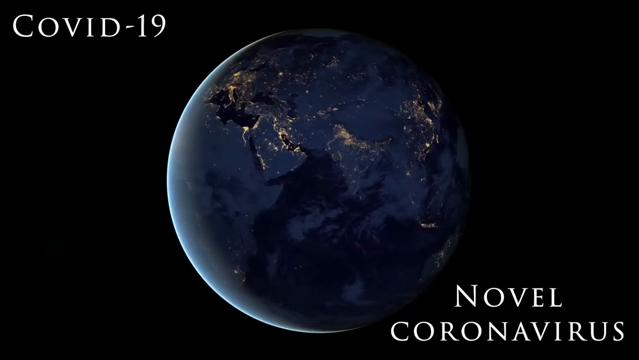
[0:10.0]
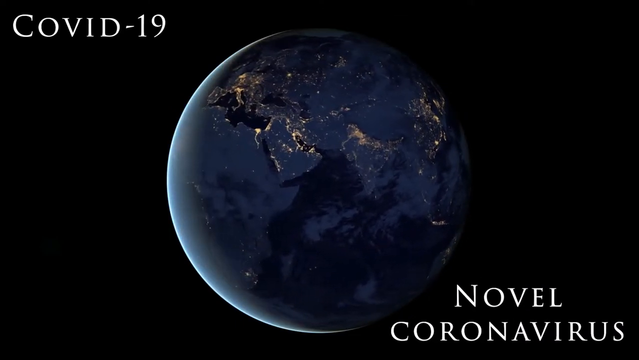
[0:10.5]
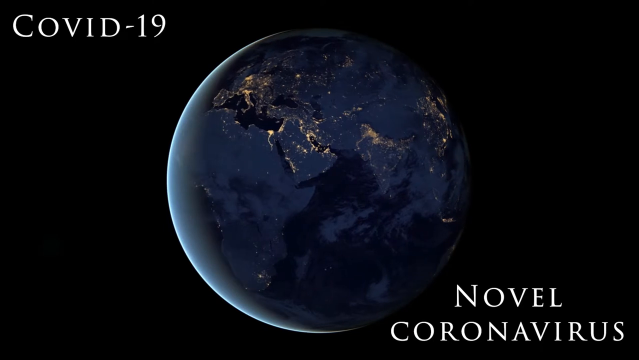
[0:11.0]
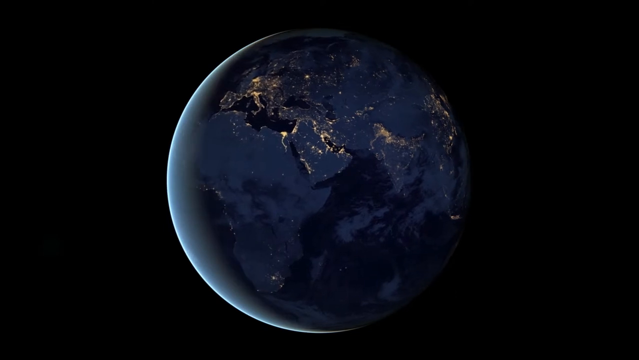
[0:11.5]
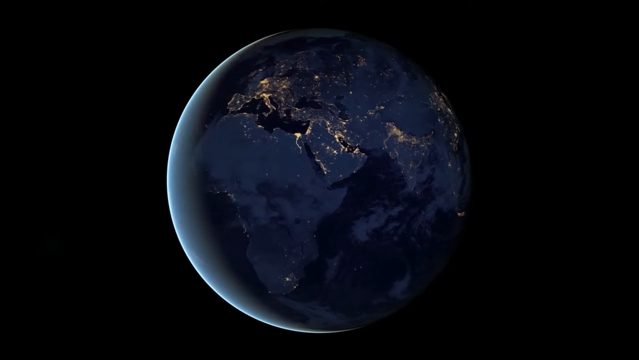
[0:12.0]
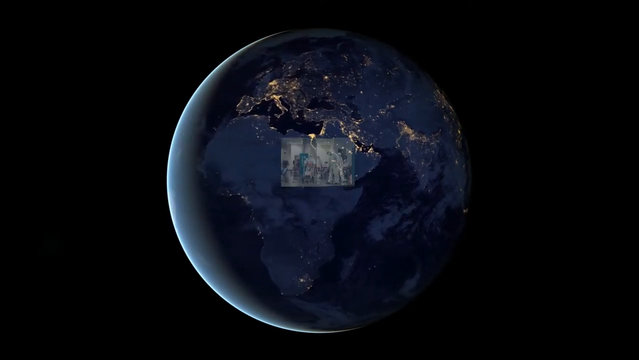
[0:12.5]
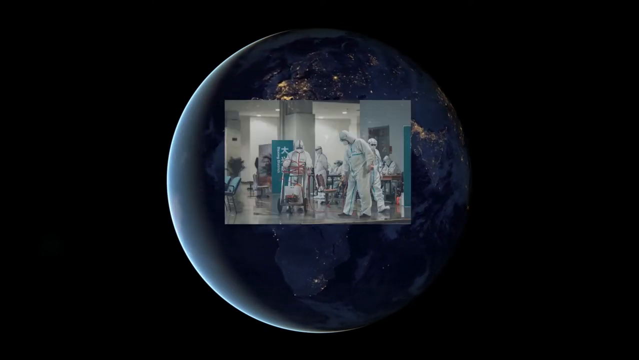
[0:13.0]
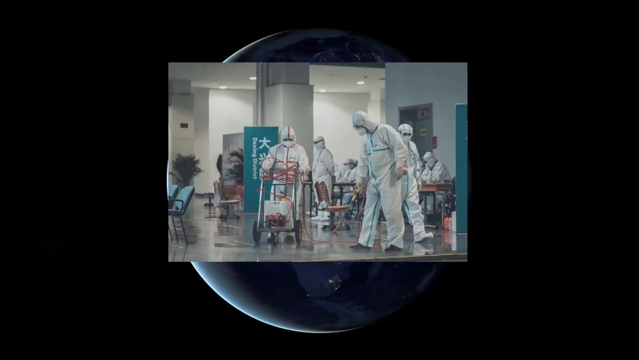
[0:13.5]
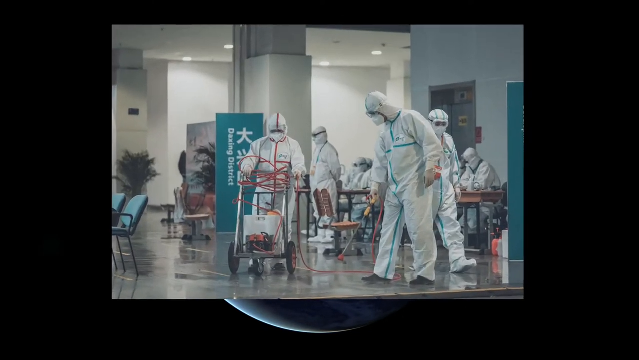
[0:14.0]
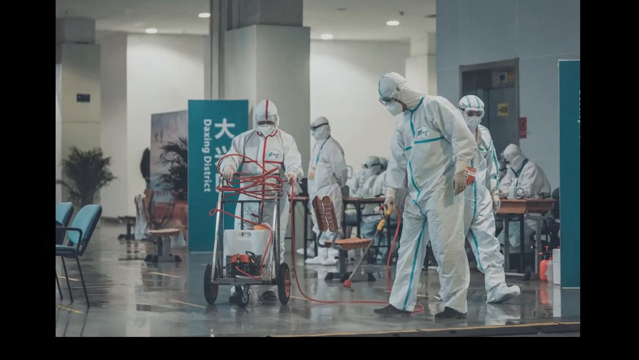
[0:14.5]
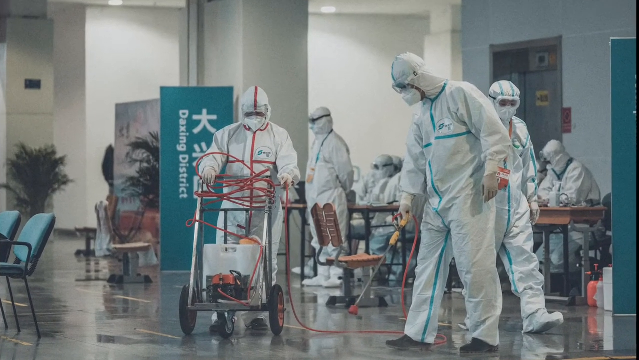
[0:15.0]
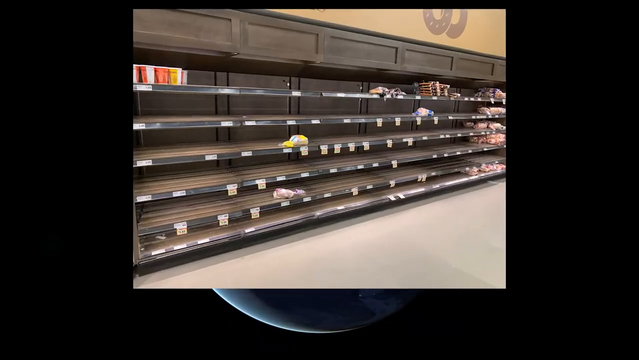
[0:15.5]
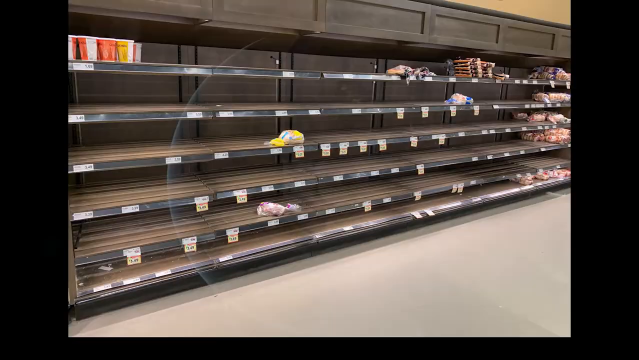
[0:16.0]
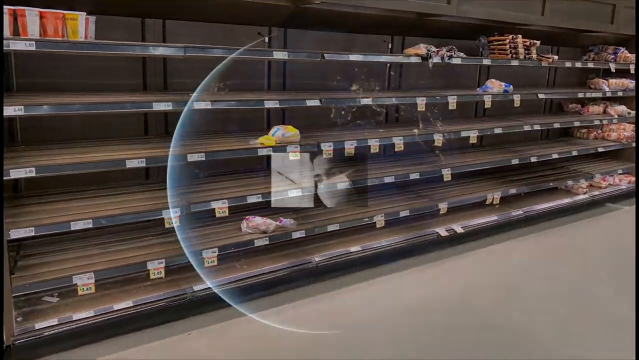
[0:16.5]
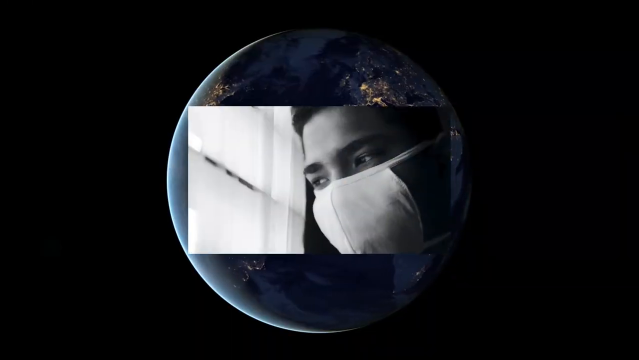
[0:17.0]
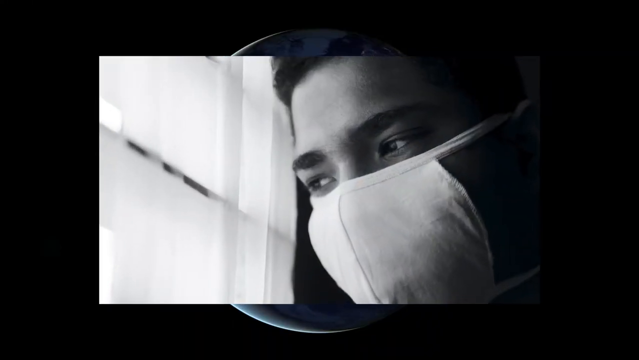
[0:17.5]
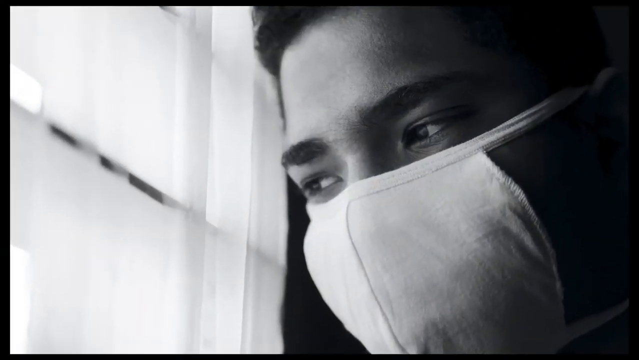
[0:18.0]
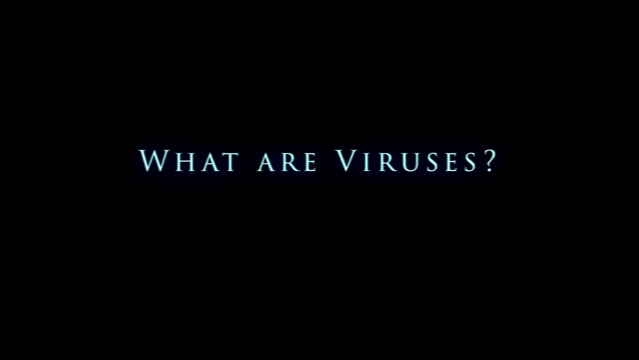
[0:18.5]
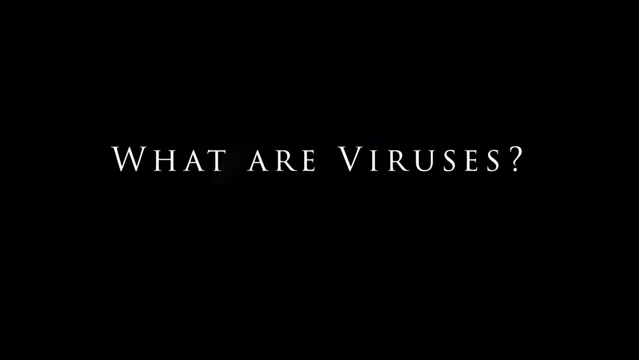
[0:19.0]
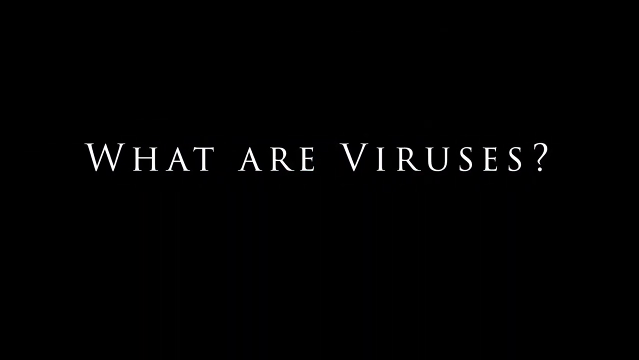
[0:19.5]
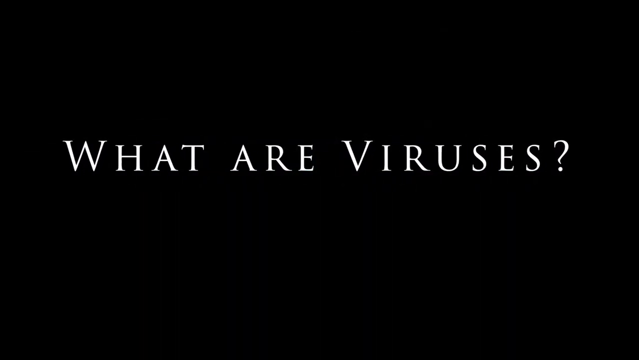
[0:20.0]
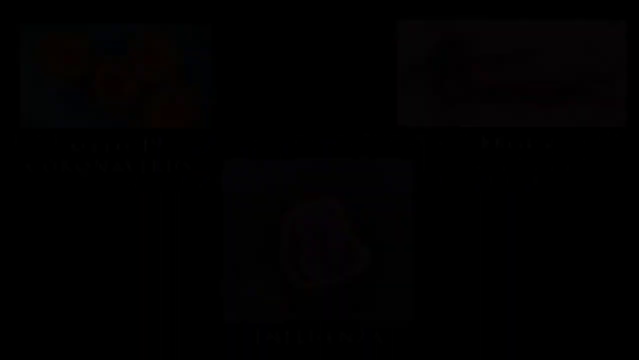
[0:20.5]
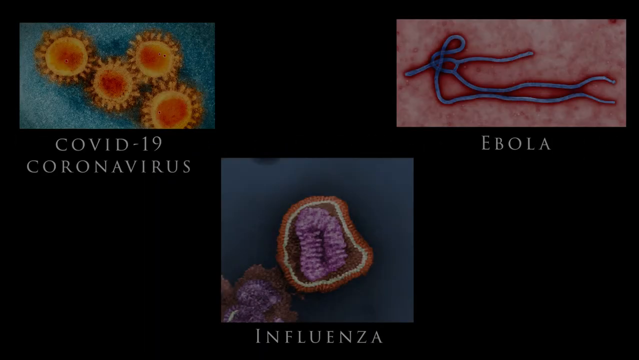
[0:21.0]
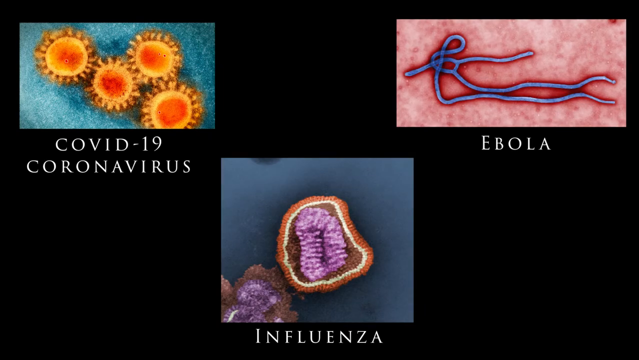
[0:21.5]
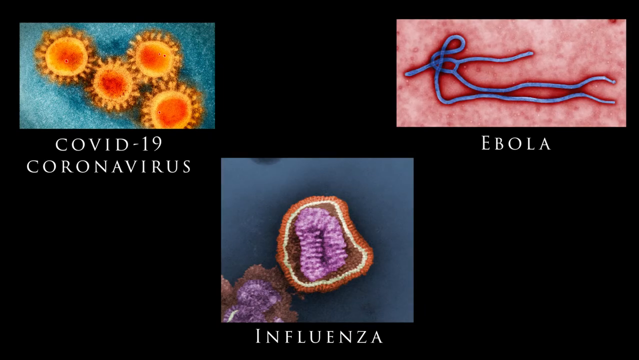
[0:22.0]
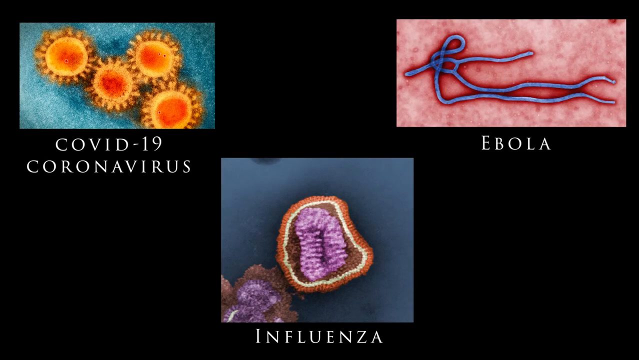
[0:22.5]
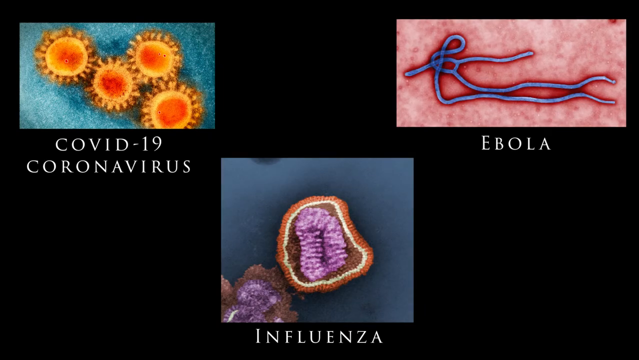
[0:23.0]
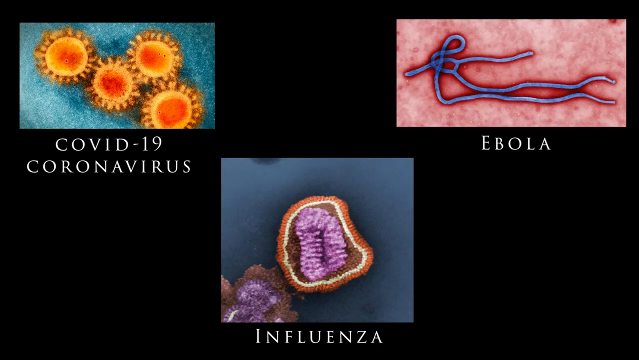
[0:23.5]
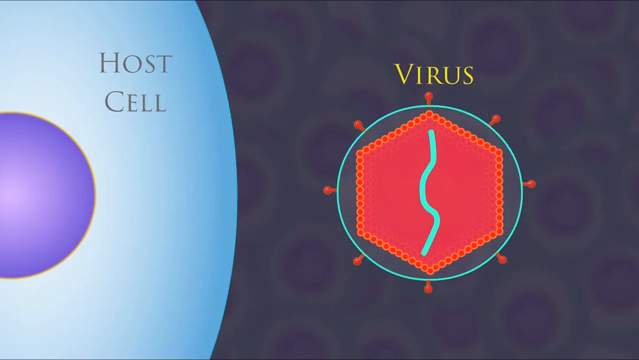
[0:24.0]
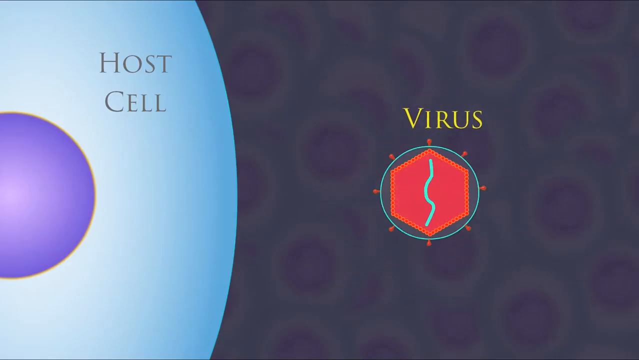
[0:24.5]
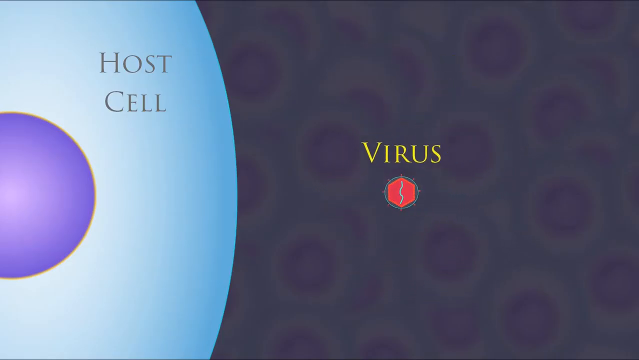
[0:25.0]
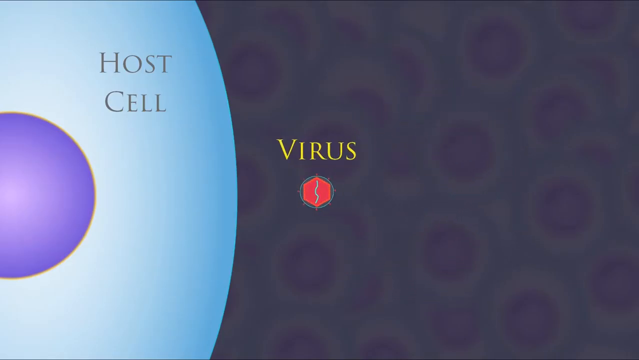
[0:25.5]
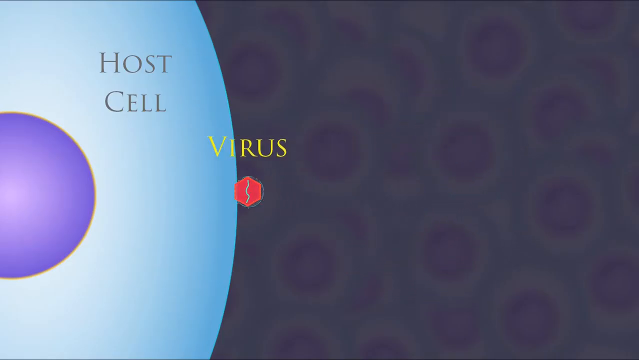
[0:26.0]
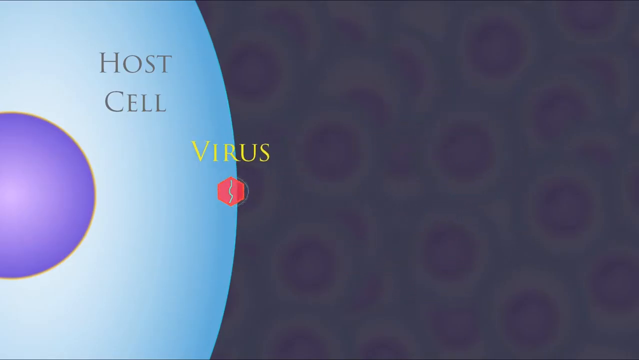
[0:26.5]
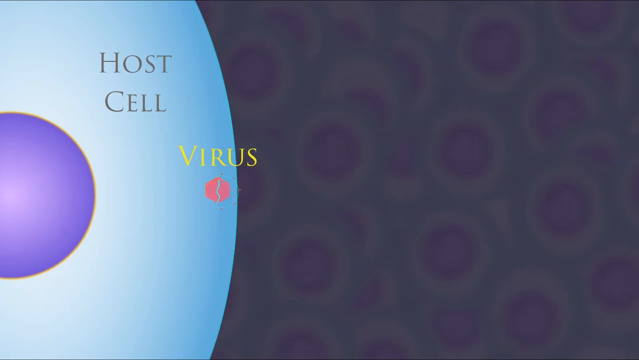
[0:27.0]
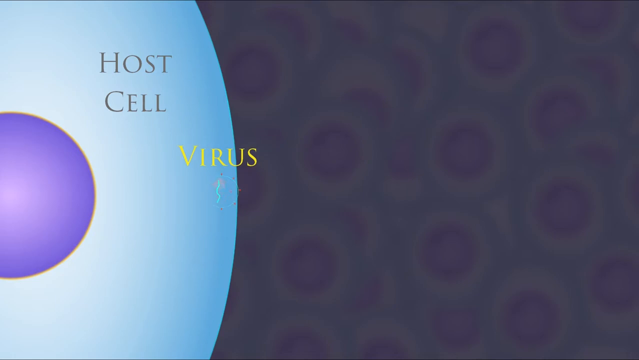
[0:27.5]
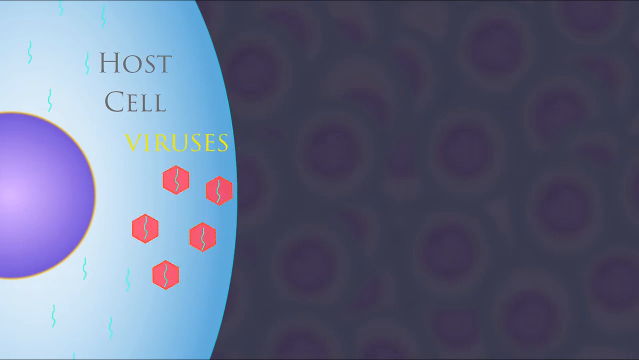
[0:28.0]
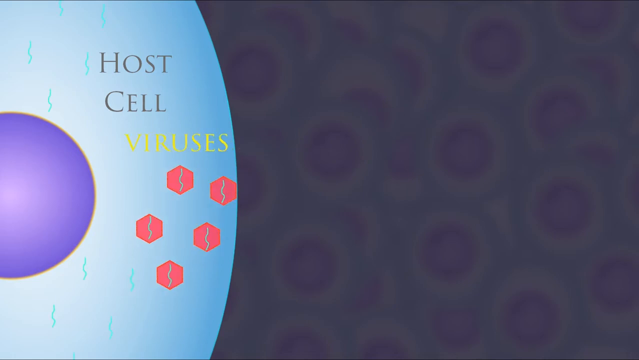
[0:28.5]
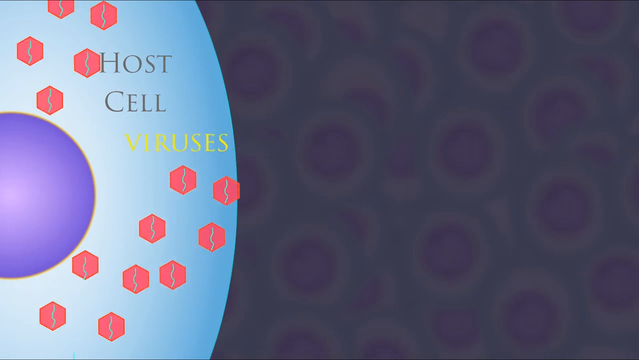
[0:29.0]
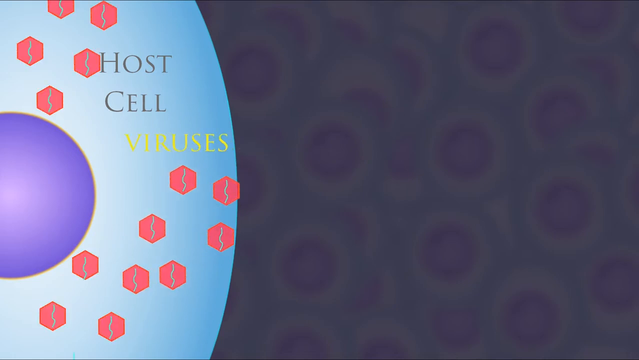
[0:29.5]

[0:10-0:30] The globe spins counterclockwise, with "COVID-19" in the top left corner of the screen and "novel coronavirus" in the bottom right. Scenes from the COVID-19 pandemic follow: people cleaning stores in different areas with cleaning solutions, empty store shelves, and people wearing face masks everywhere. The text "what is virus" appears again. The next screen shows the Ebola virus in the upper right corner, the COVID-19 coronavirus in the upper left corner, and the influenza virus at the bottom center, apparently as they would look under a microscope. The video then moves to a screen showing how a virus enters the host cell.